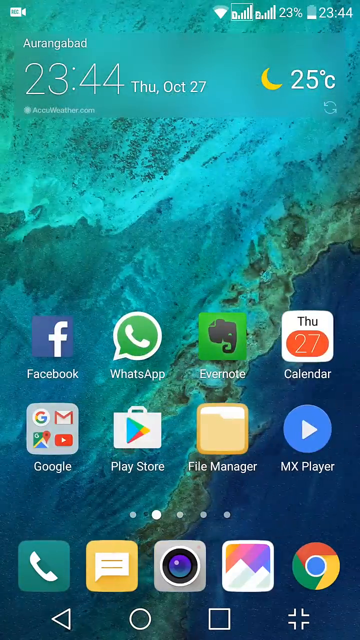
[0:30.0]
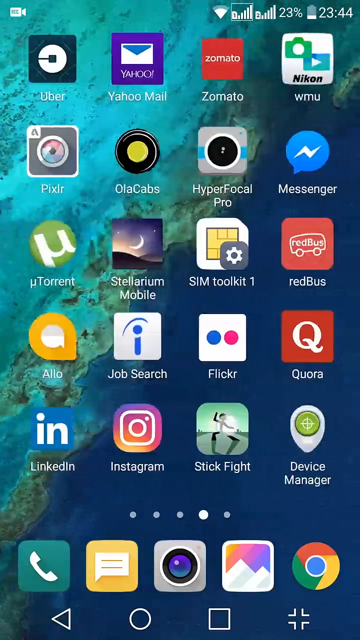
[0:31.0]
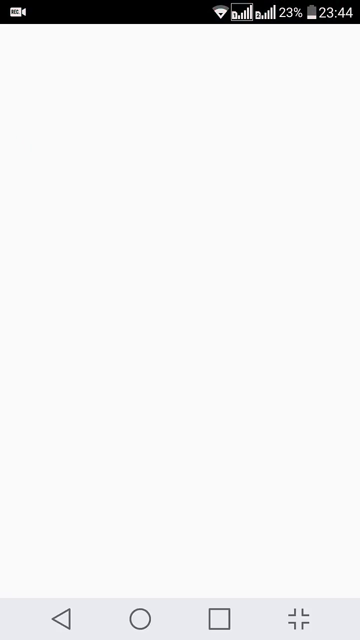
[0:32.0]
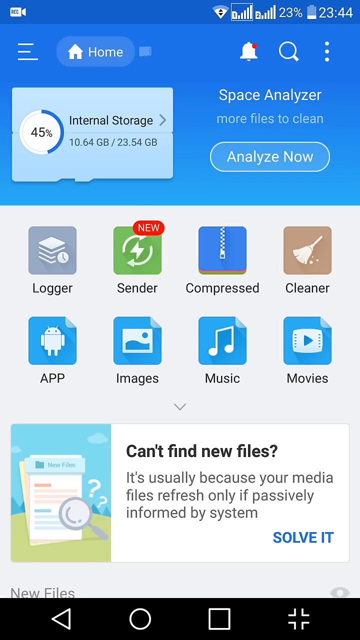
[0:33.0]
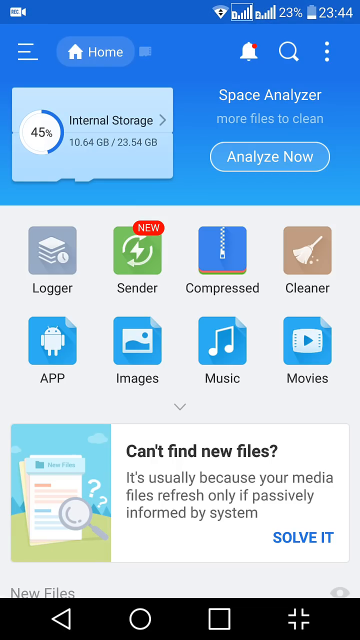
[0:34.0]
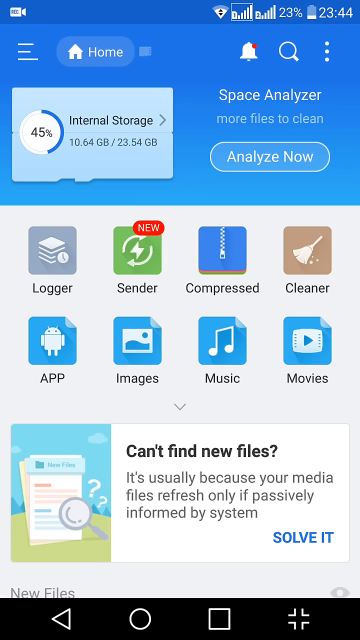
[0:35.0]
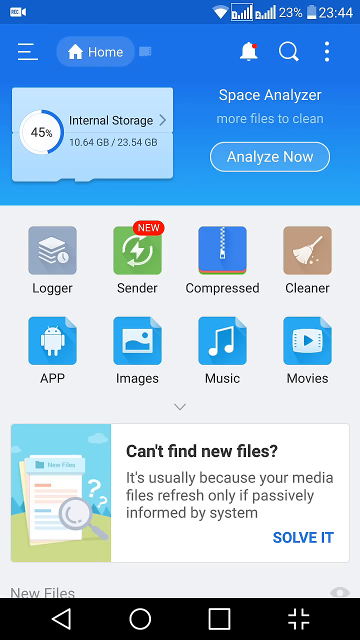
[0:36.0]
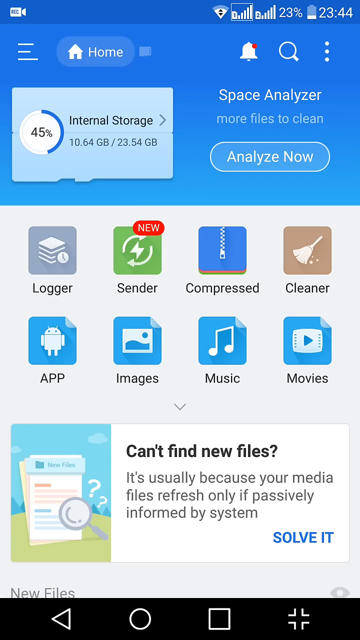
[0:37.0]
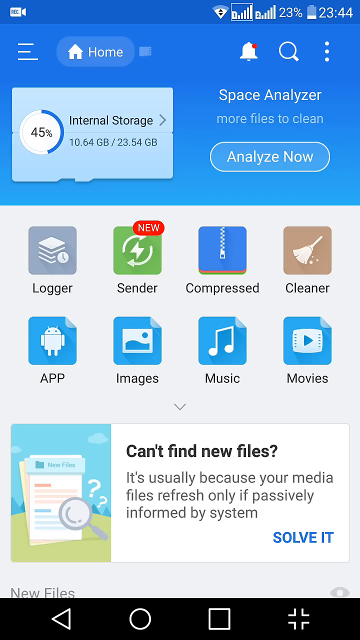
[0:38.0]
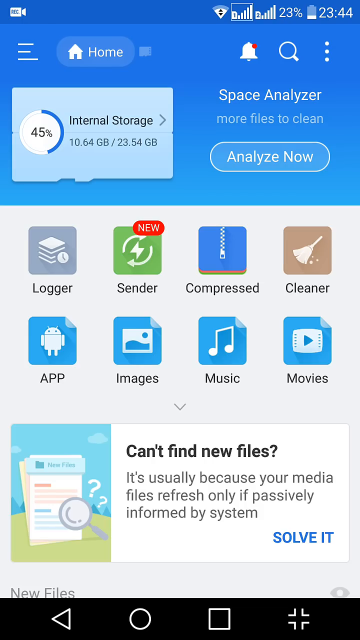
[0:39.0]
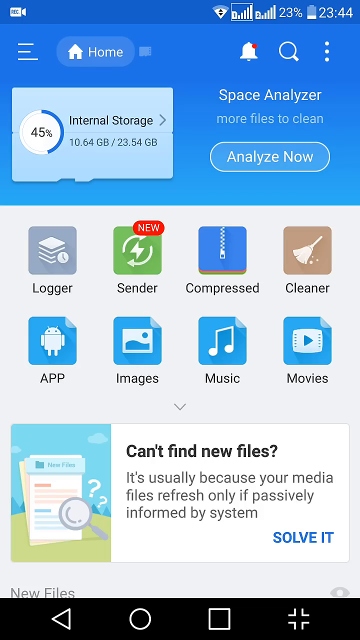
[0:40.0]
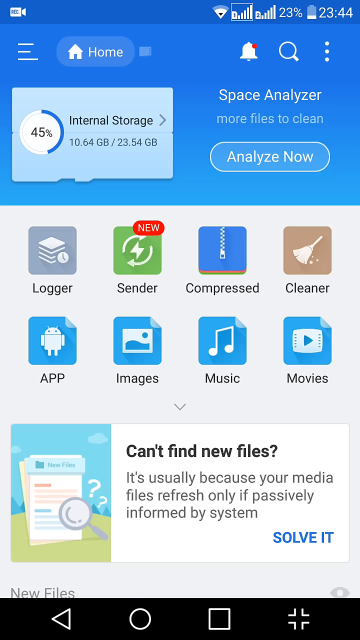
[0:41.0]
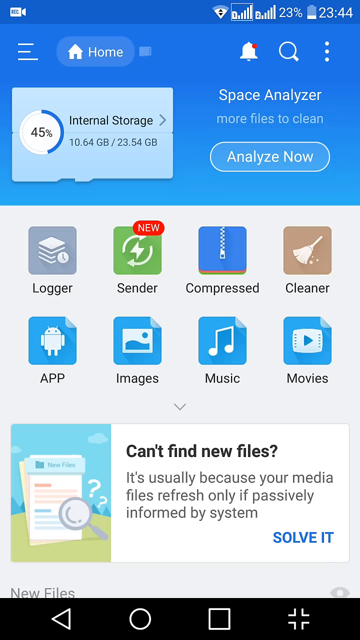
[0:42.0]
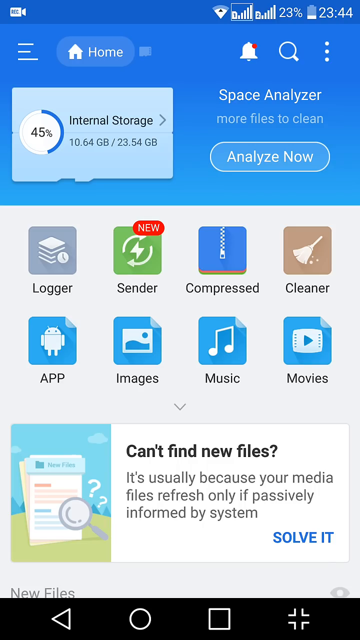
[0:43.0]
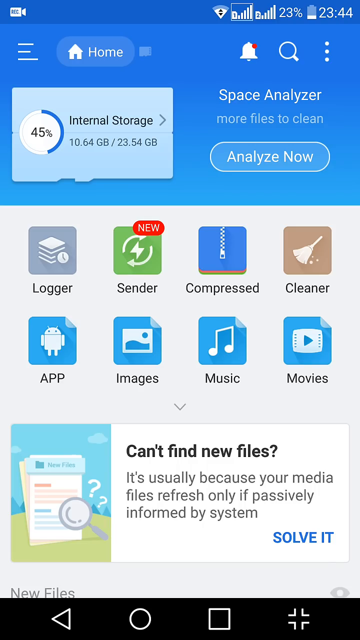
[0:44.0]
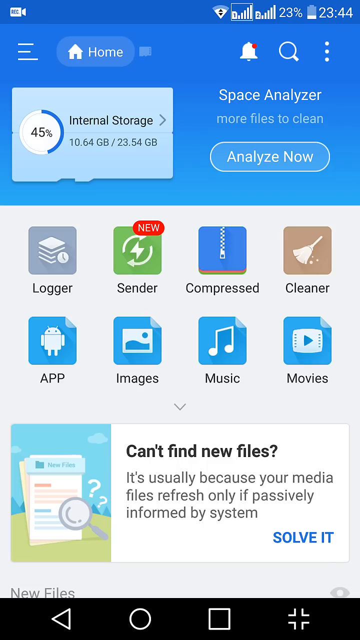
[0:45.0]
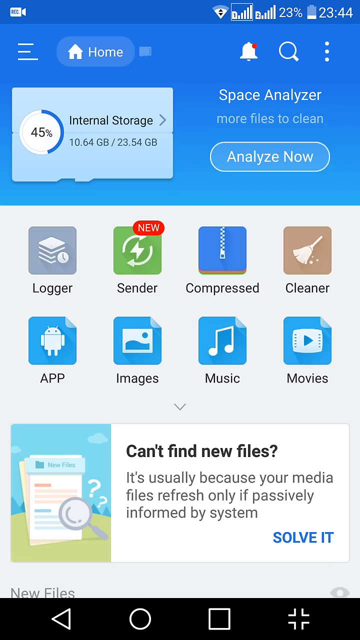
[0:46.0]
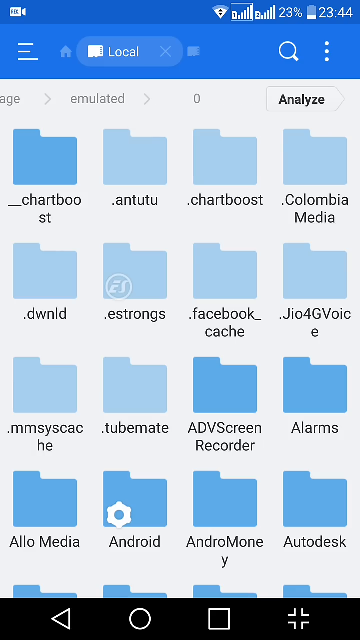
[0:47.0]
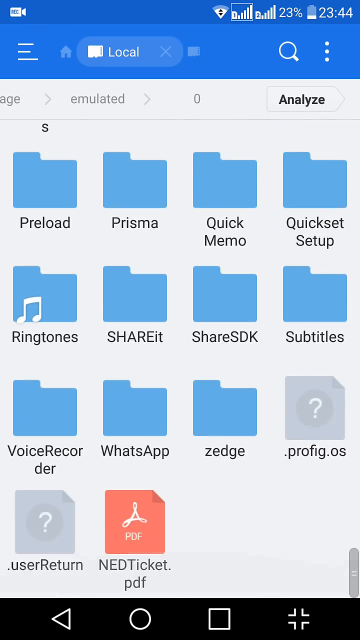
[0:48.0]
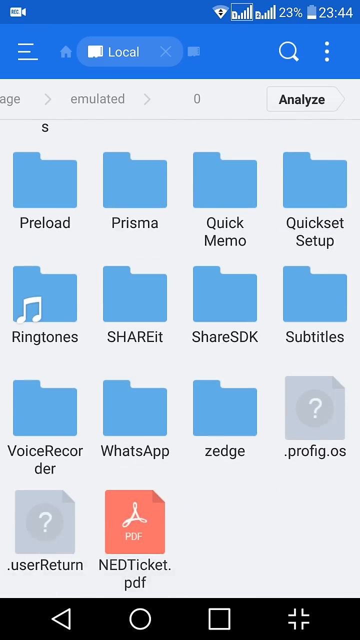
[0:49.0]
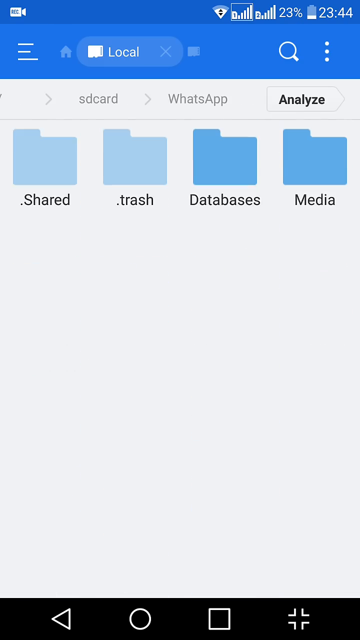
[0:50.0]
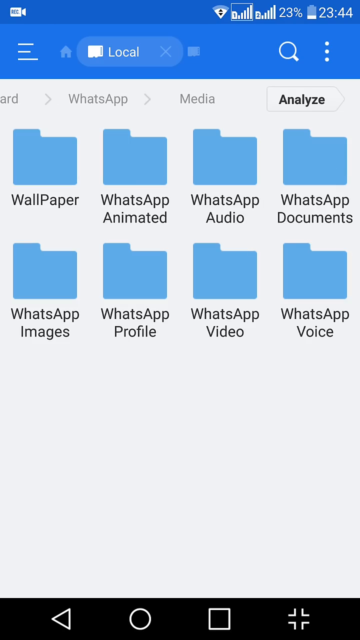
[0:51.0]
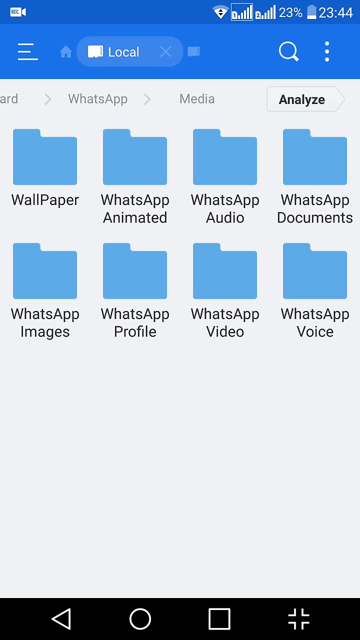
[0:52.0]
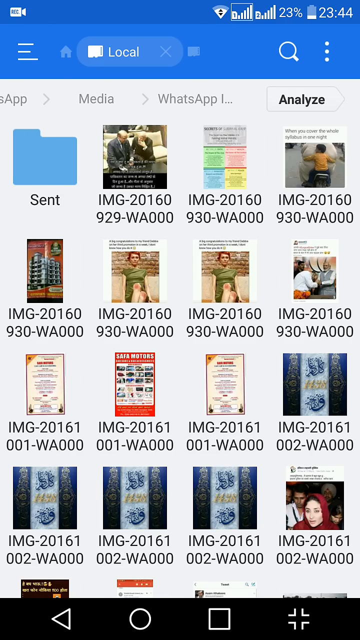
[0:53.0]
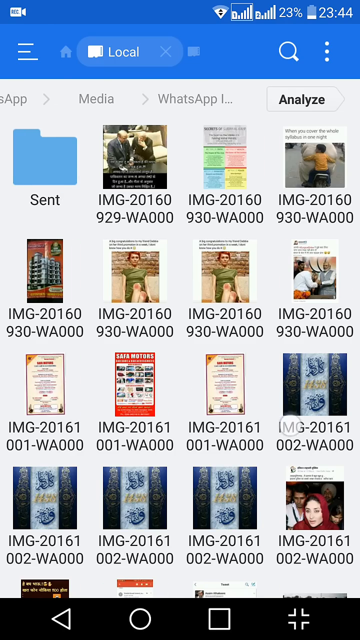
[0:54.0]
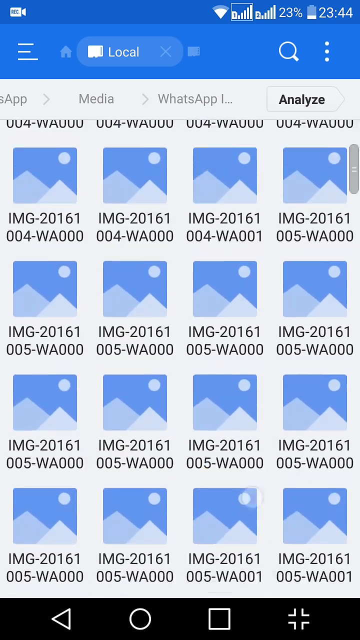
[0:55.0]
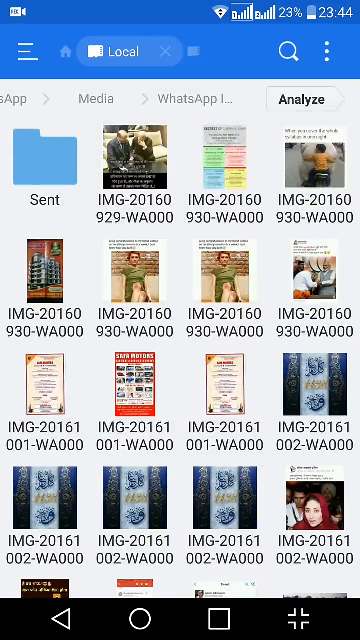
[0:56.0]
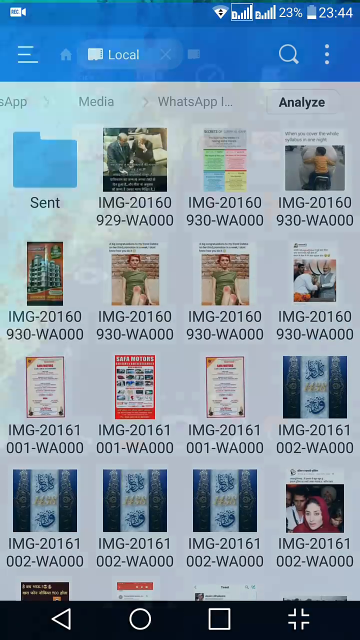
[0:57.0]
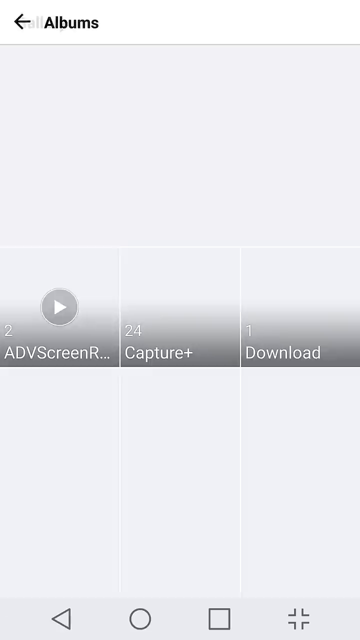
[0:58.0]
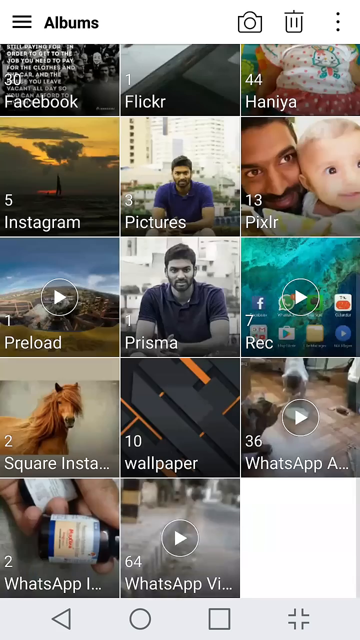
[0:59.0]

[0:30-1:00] The time in the upper left-hand corner reads "23.44", 11:44 in military time. The phone is charged at 23%, less than a quarter. It reads "25 degrees Celsius" with a yellow crescent moon next to it. The person swipes through apps, including Messenger, Redbus, Stick Fight, Instagram, LinkedIn, Face Manager, MP3 Video Converter, ES File Explorer, Tube, Mate, Square, Instapick, Tiger Ball, PayPal, SIM Toolkit 2, and a soccer game, with the text "16UT" and "REC" visible. The screen then goes white and shows Space Analyzer, Internal Storage at 45%, and options for Compress, Cleaner, Music, Movies, App, Images and Logger. The person goes into Files and apparently clicks on WhatsApp, where various images the person has are shown. They go back out of it, and different videos come into view.